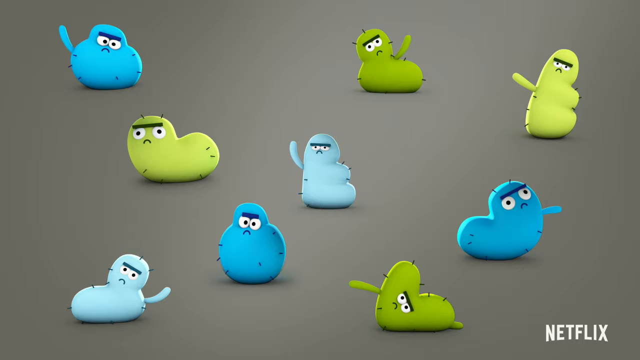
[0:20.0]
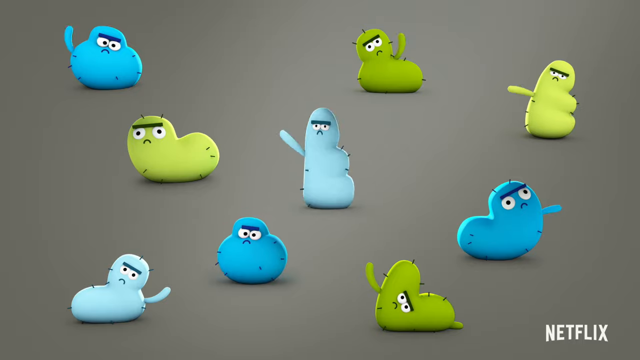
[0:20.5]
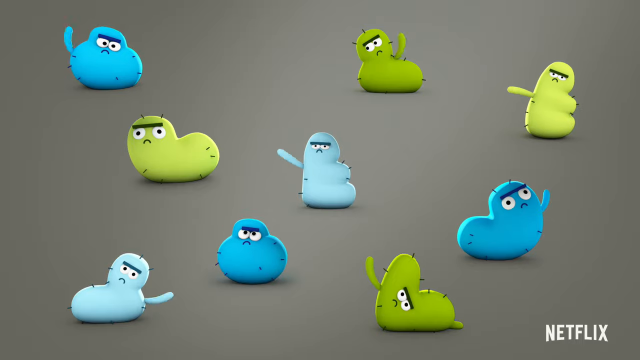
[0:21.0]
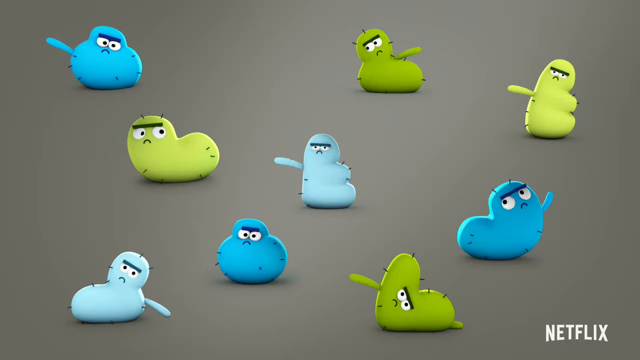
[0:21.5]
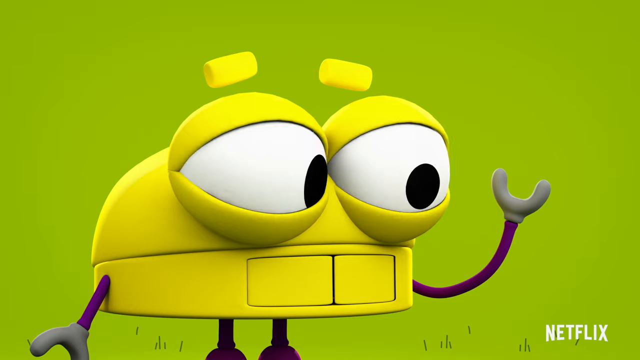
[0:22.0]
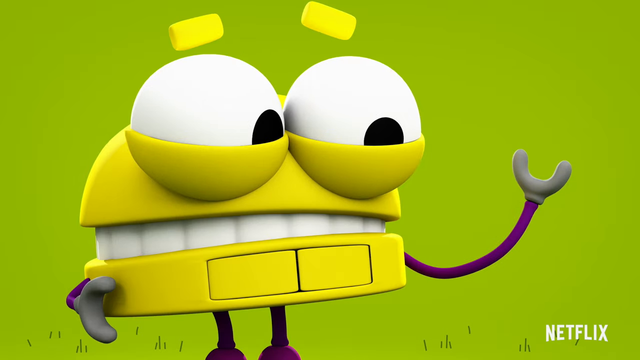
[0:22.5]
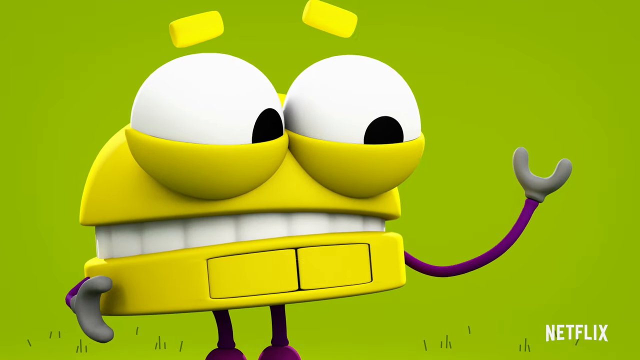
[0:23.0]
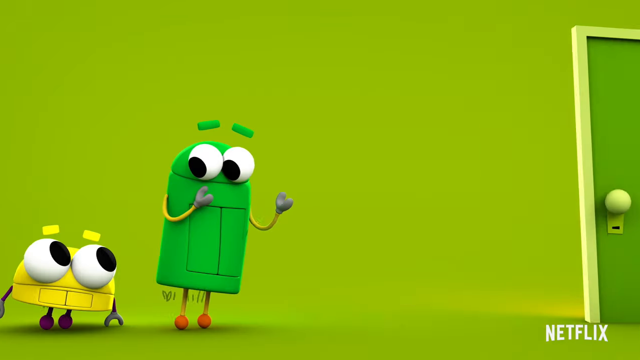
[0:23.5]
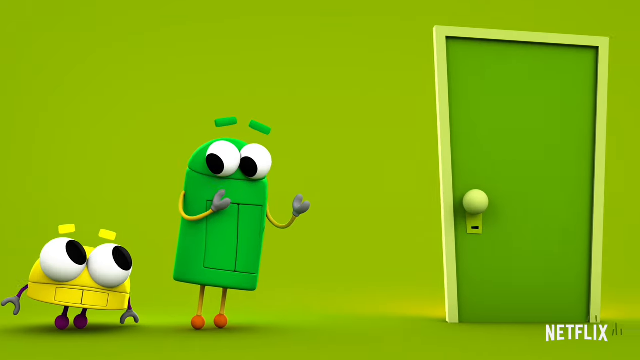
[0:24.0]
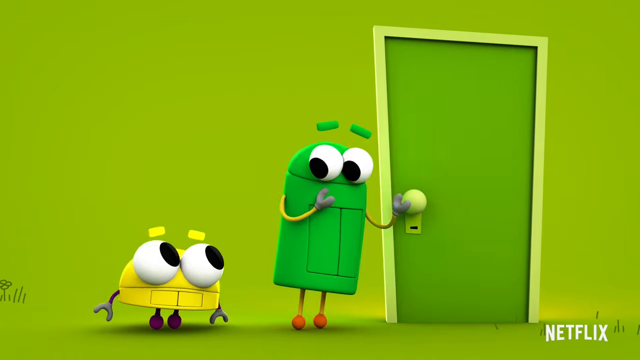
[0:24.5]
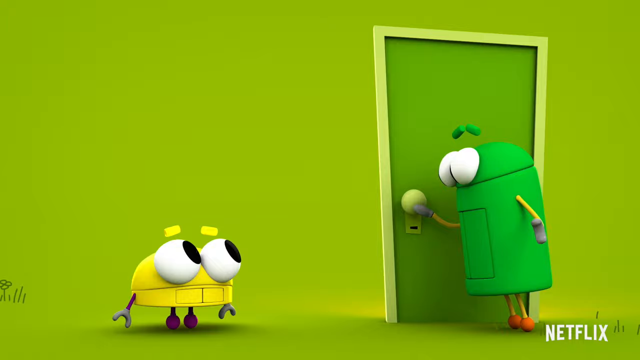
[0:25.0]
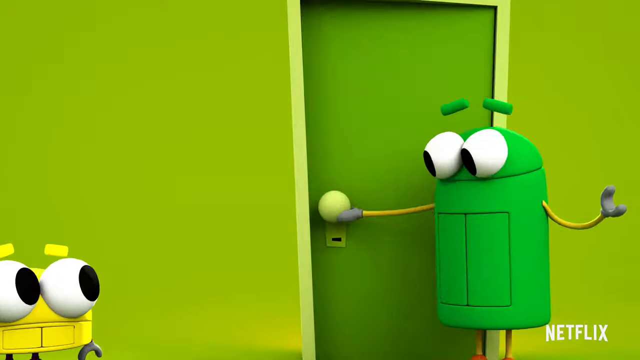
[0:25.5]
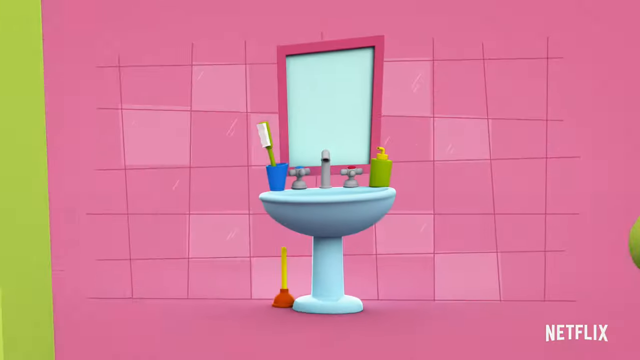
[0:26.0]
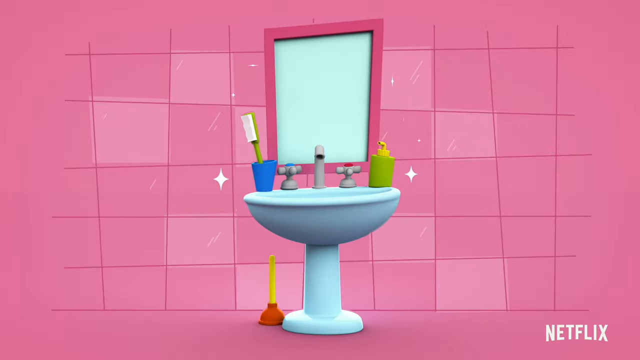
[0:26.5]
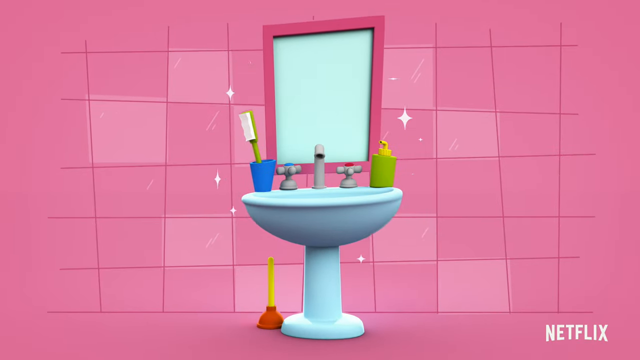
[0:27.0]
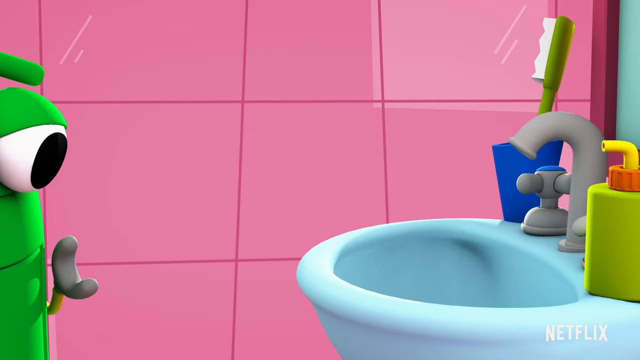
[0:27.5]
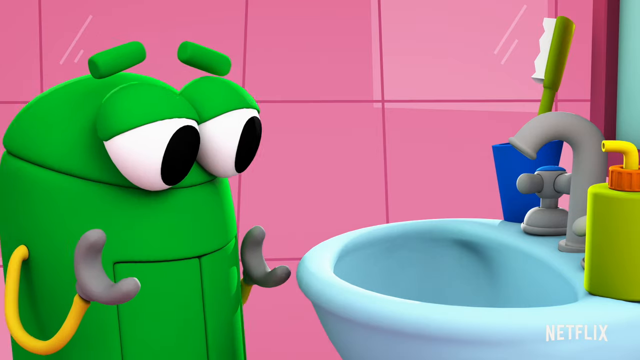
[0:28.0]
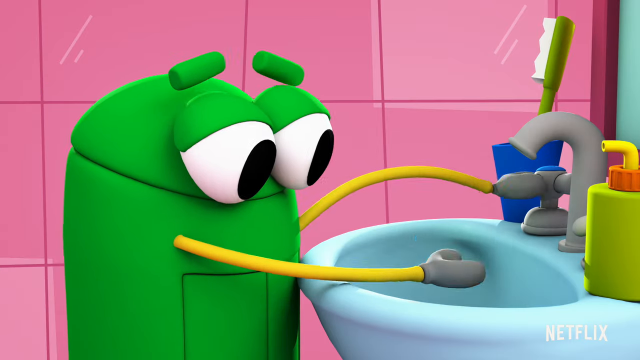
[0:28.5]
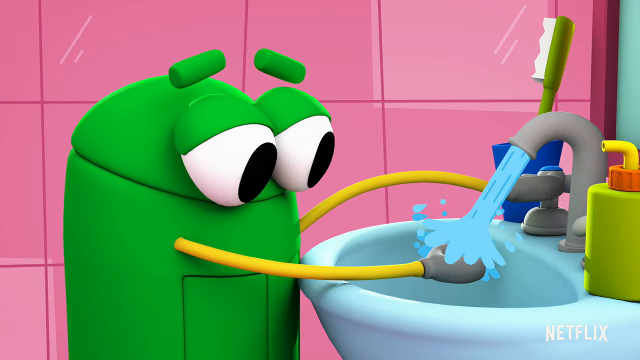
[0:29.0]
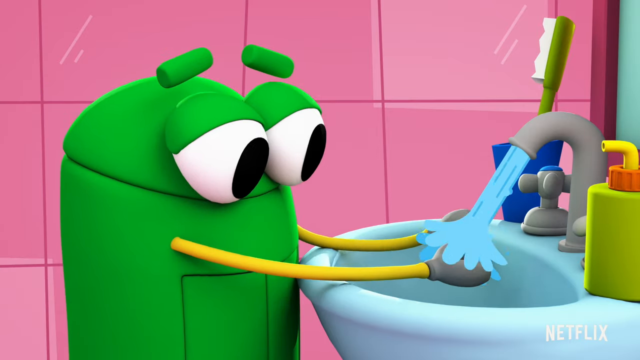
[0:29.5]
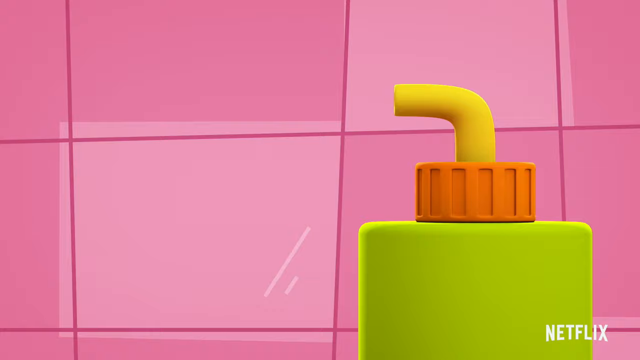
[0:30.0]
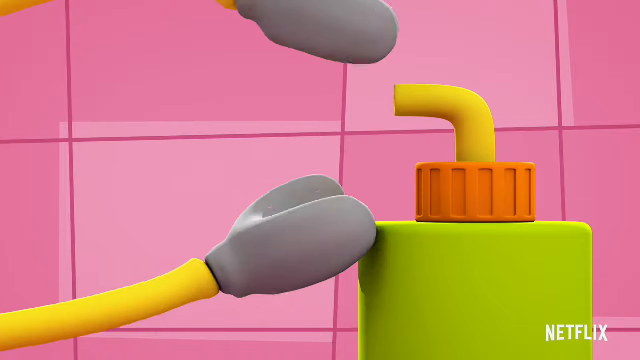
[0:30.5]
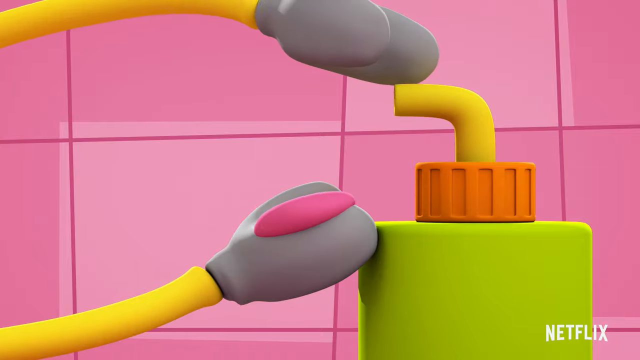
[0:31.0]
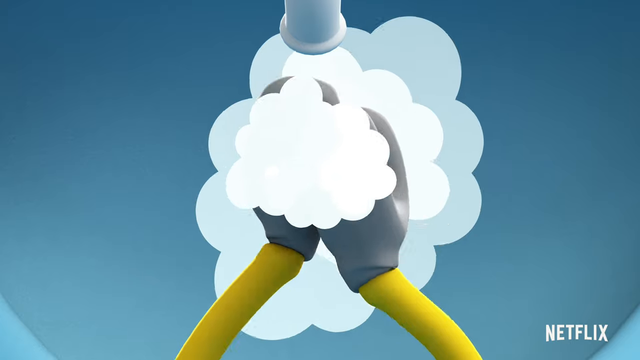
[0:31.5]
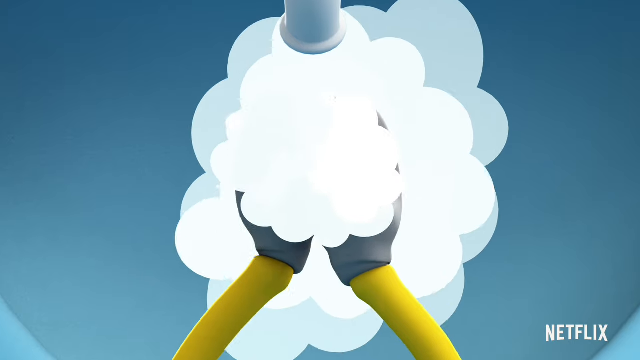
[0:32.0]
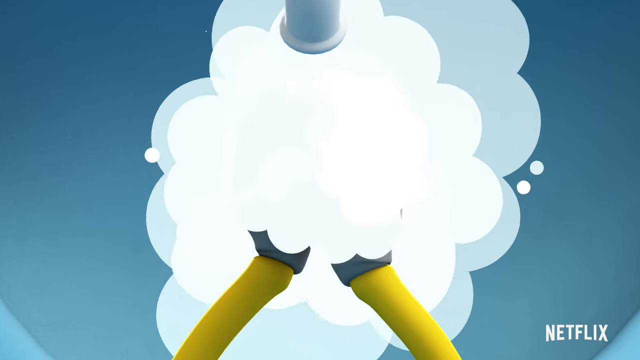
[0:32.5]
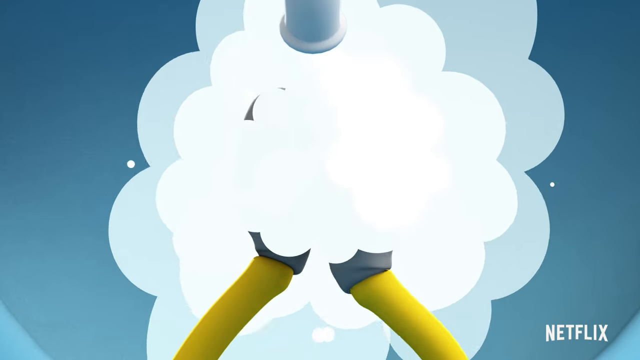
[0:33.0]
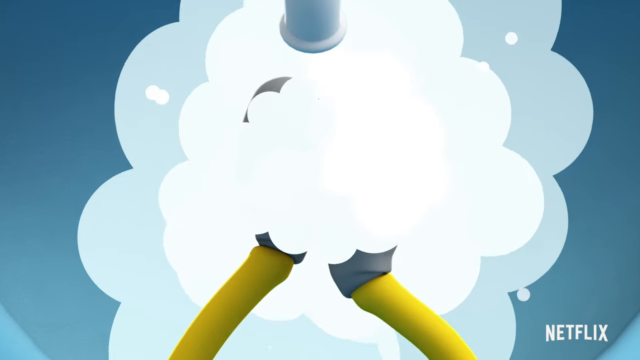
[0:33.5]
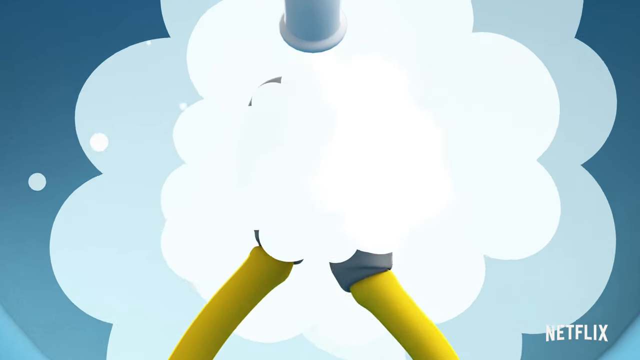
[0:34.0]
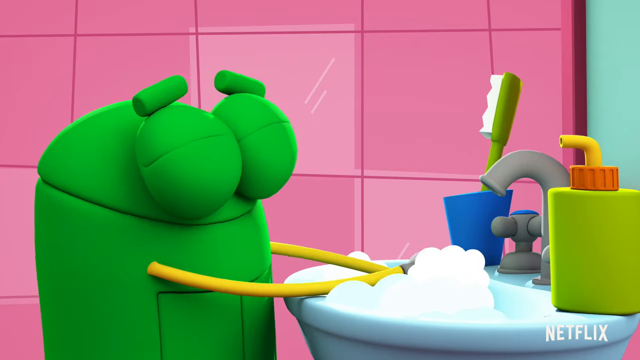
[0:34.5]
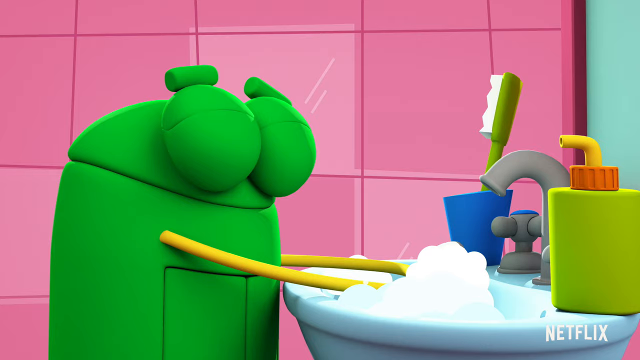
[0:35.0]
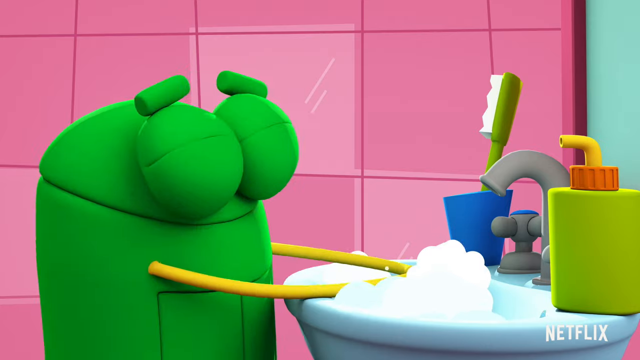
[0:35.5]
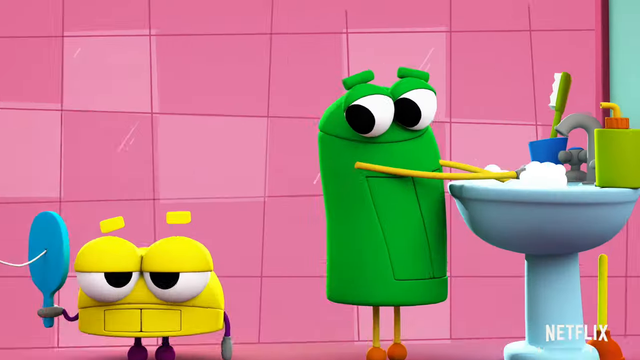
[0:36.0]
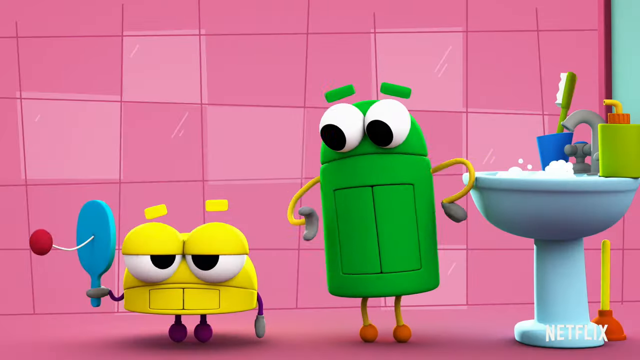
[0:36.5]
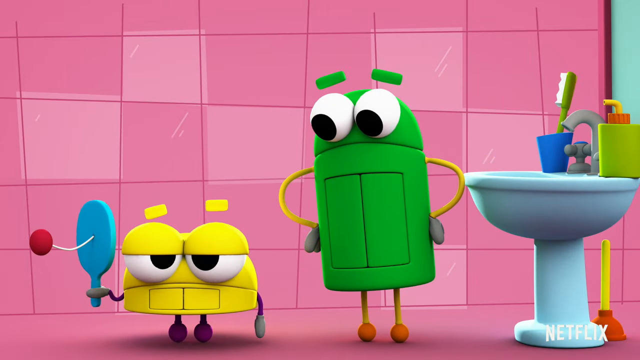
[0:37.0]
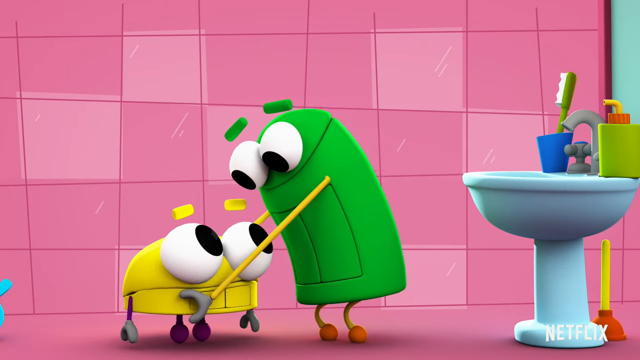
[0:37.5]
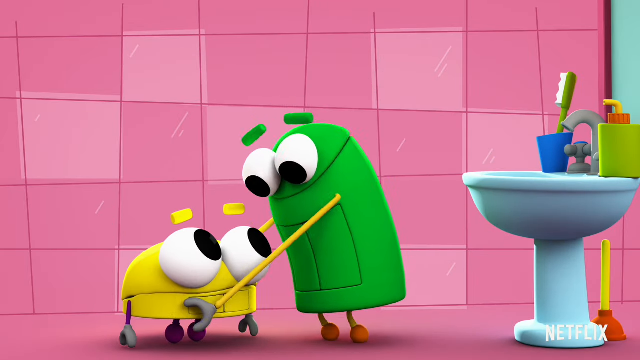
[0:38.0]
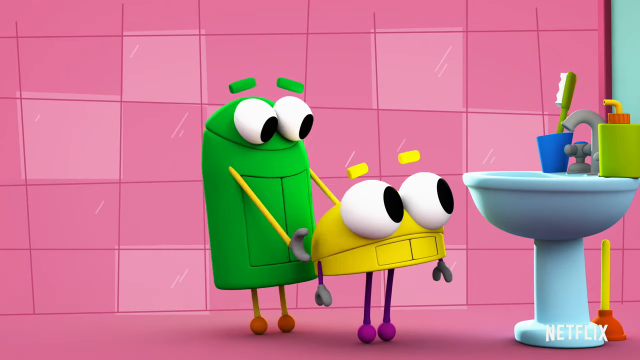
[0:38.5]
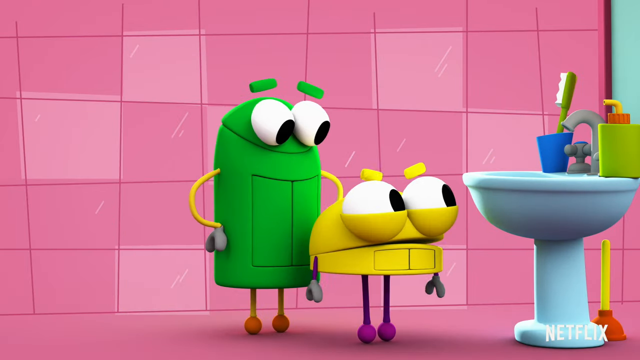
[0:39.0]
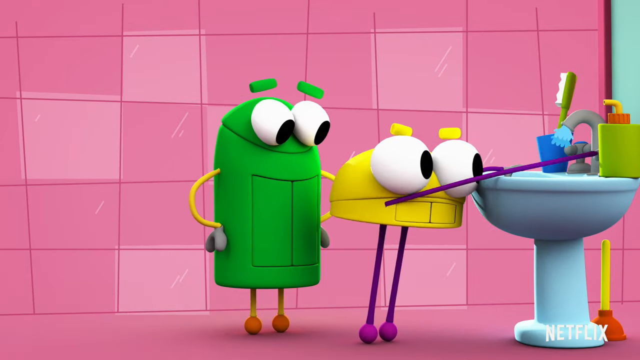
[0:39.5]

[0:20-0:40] The zoomed-in view shows nine different types and shapes of bacteria. They are all kind of blob-shaped and hairy, with hairs poking out, and they are all frowning and have, like, unibrows. Some have appendages that are waving. They are all different, in various colors of green and blue, mostly lime green, sky blue and cerulean, and they are all kind of waving their little appendages. The view returns to the yellow creature, which suddenly looks pretty concerned: its eyebrows turn upward and it separates slightly to show a teeth kind of expression, as if cringing. It goes to the right with the green creature, and they wheel over to a green door. The green creature opens it, revealing a hot pink bathroom with just one sink with a faucet, a mirror with a pink frame, a cup with a brush in it, and a green soap pump. To the left of the sink is a plunger on the floor. The view zooms in slightly. The green creature comes over to the sink, turns on the cold water faucet, and water comes out. It dispenses pink soap and washes its hands under the faucet, enjoying itself, as the sink fills with suds; it has a very pleased expression. It then looks back at the yellow creature, kind of smugly. The yellow creature is not very happy; it is playing with a ping-pong paddle attached to a ball on a string, looking away and kind of frowning. The green one pulls the yellow one in and positions him right in front of the sink. The yellow one frowns at it, then his legs extend so he can use the sink, and he washes his hands frantically.